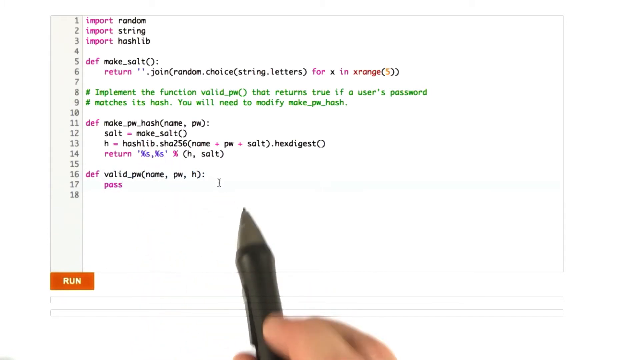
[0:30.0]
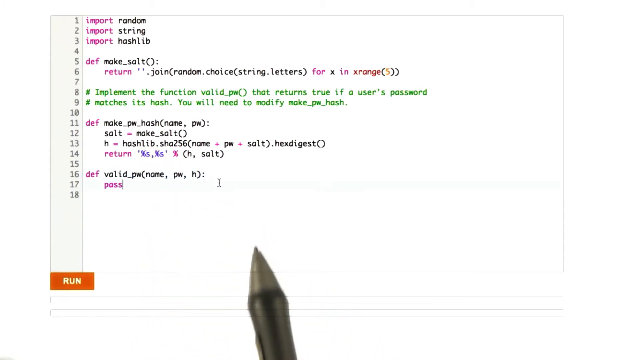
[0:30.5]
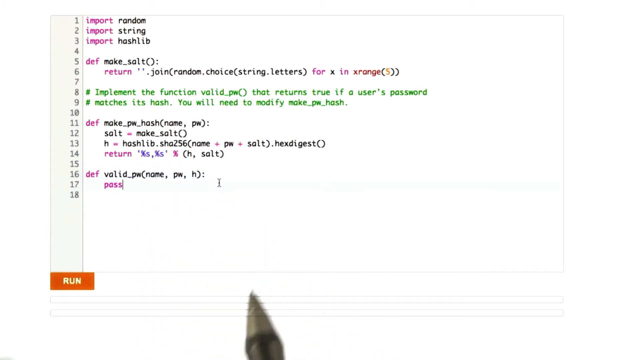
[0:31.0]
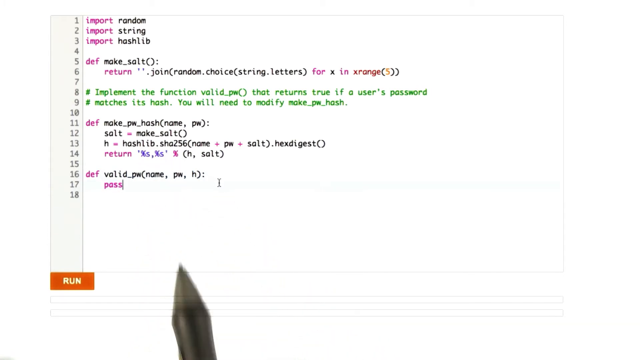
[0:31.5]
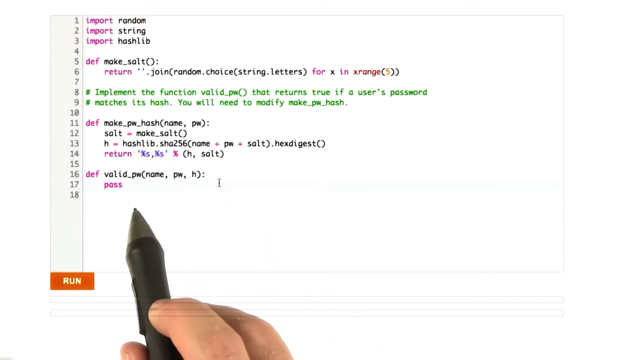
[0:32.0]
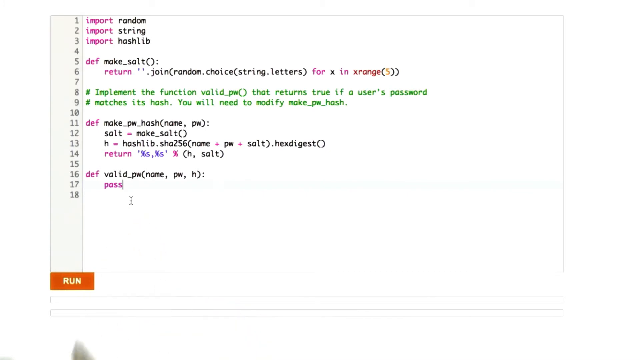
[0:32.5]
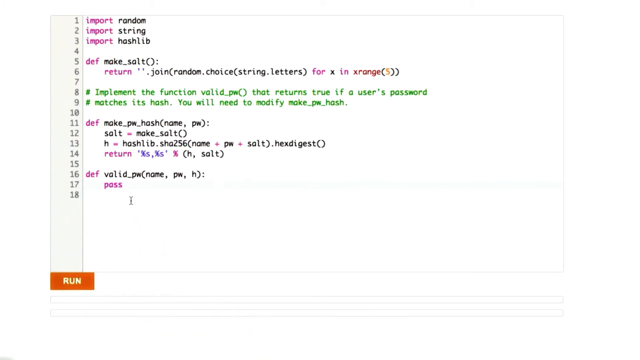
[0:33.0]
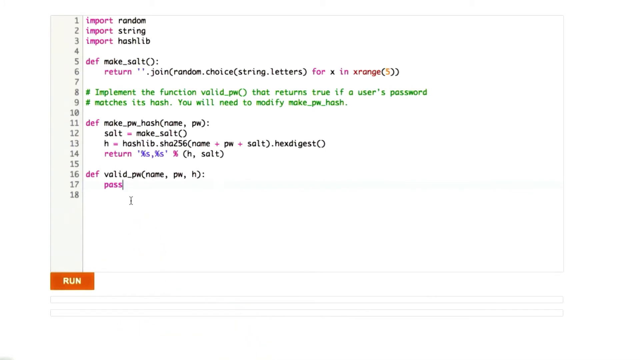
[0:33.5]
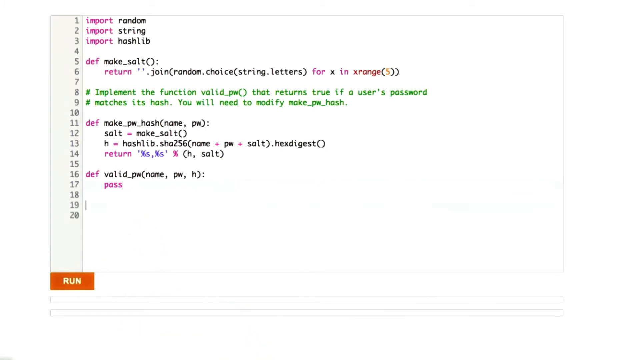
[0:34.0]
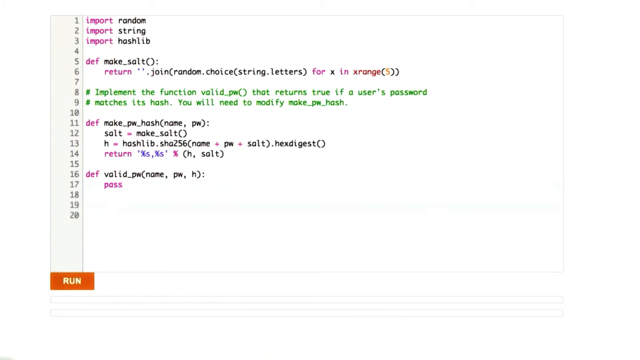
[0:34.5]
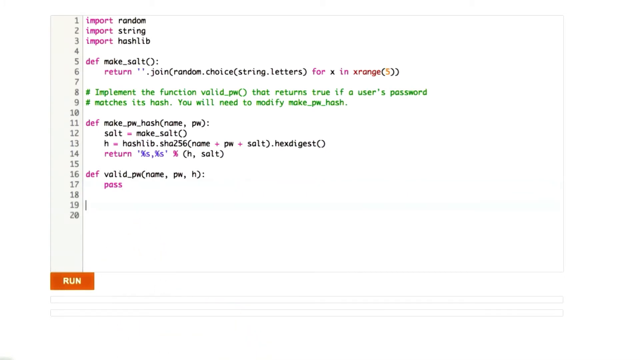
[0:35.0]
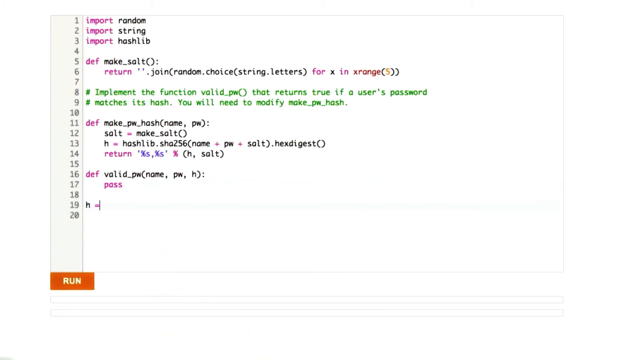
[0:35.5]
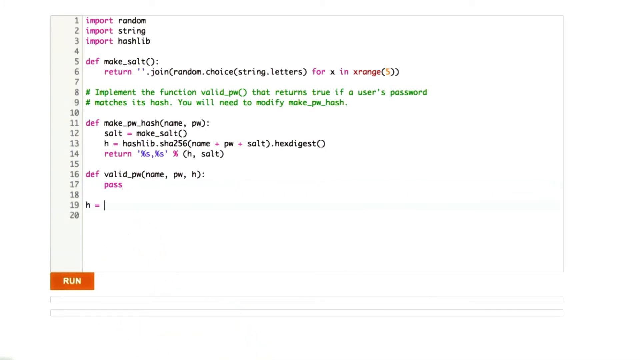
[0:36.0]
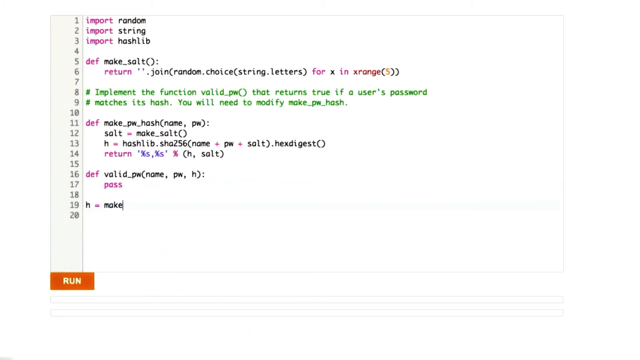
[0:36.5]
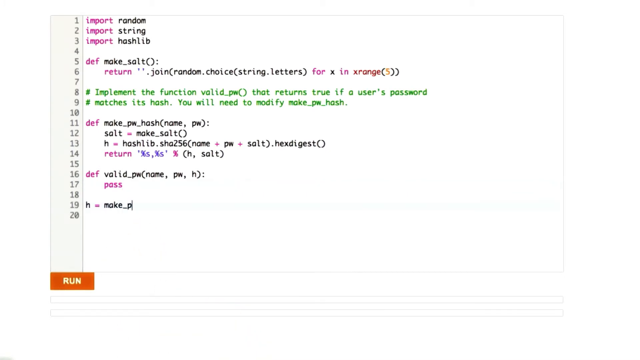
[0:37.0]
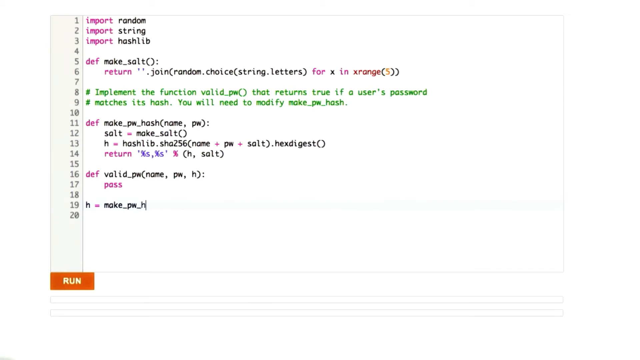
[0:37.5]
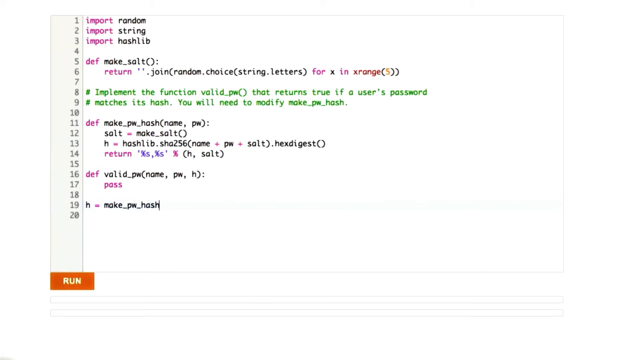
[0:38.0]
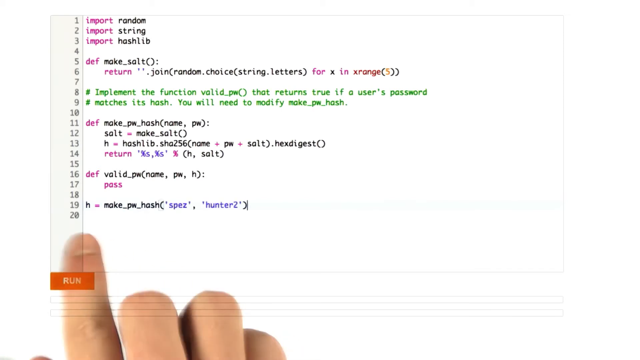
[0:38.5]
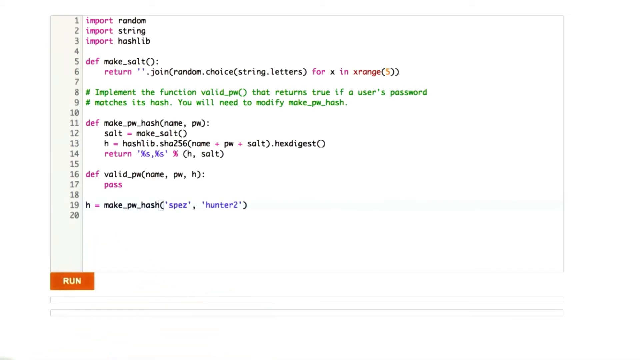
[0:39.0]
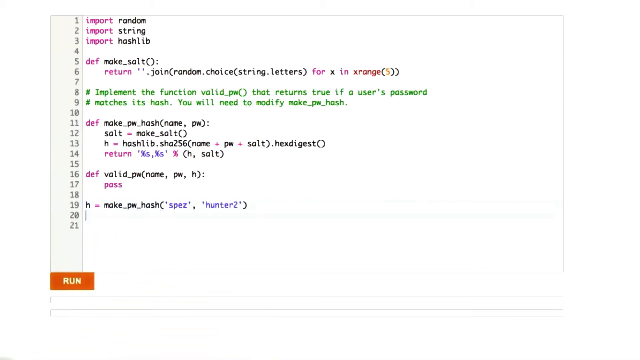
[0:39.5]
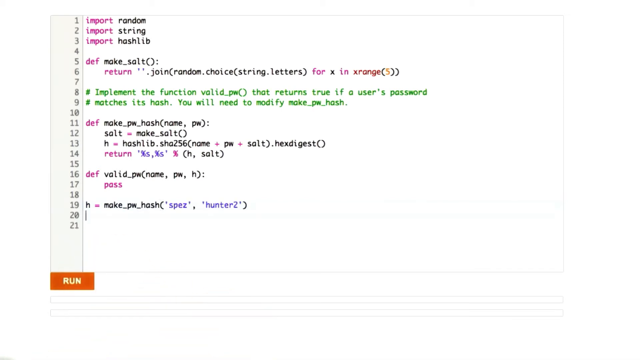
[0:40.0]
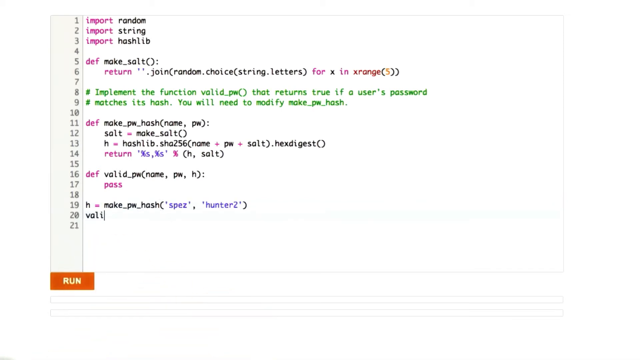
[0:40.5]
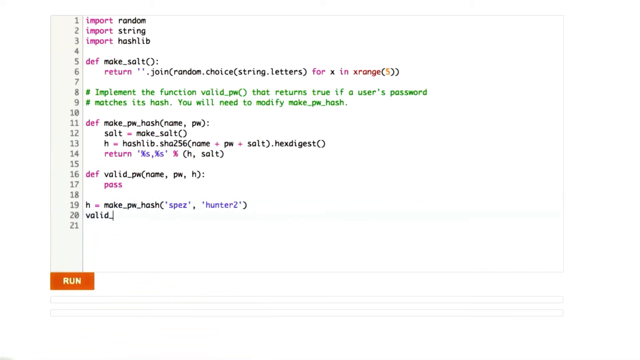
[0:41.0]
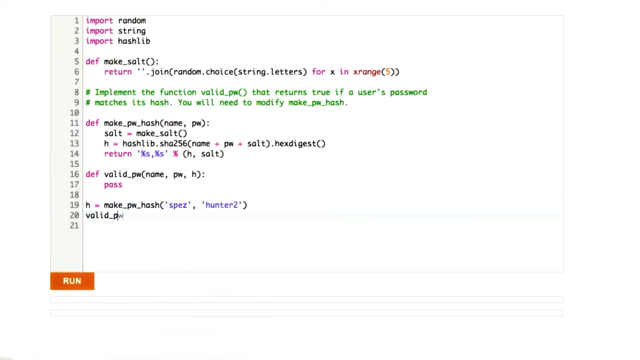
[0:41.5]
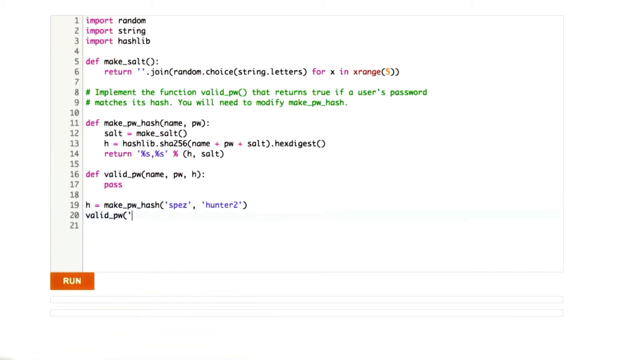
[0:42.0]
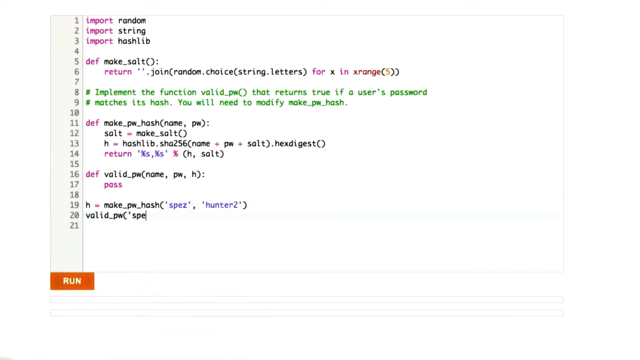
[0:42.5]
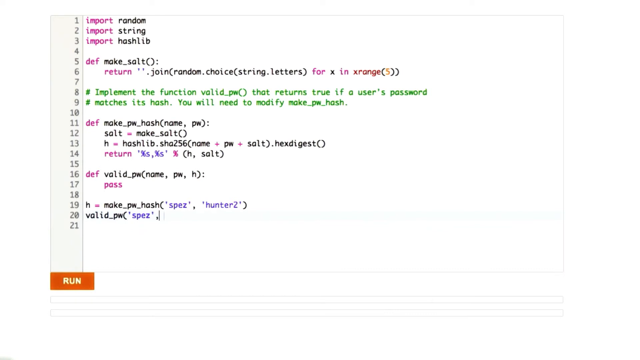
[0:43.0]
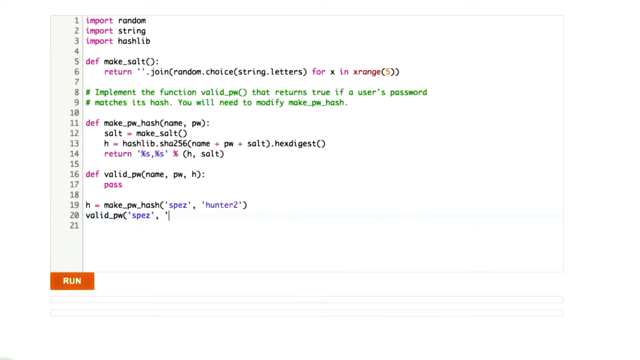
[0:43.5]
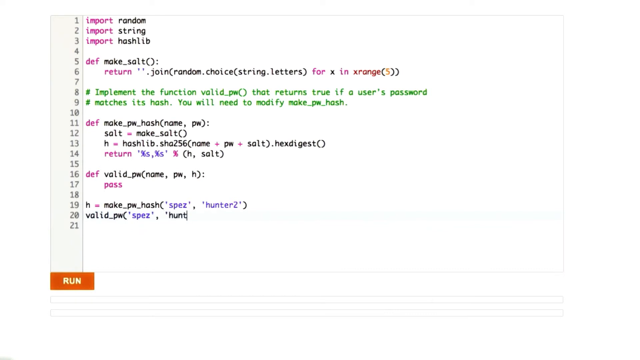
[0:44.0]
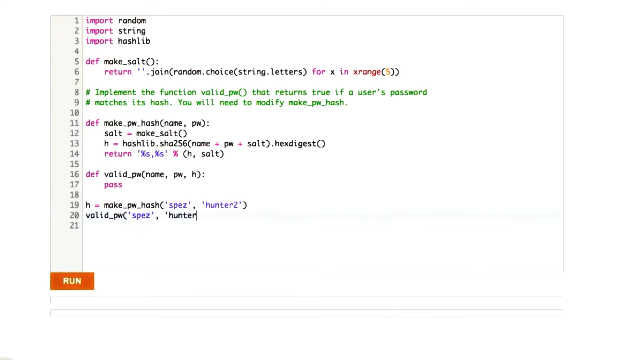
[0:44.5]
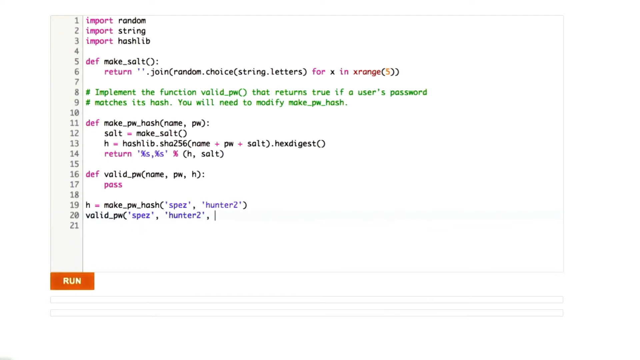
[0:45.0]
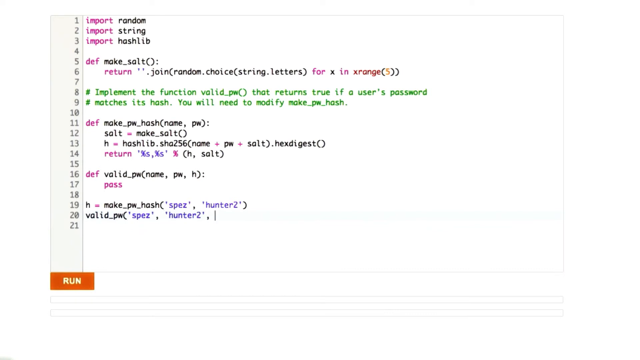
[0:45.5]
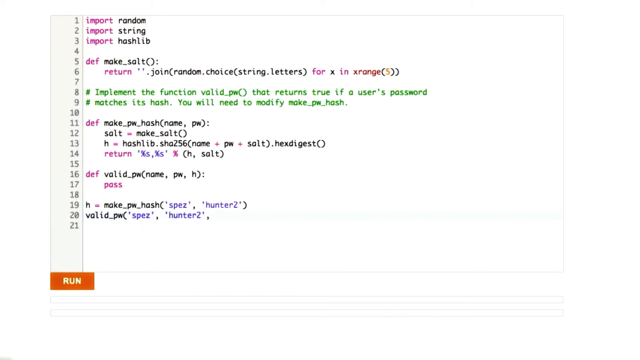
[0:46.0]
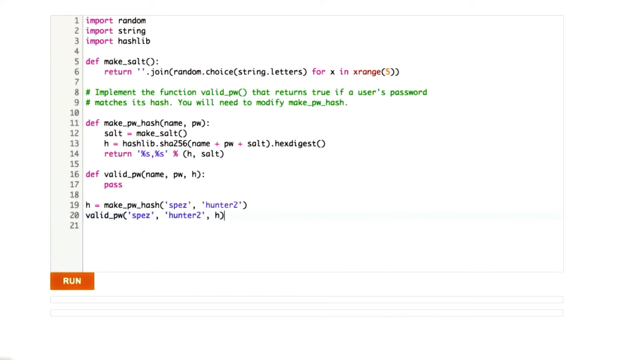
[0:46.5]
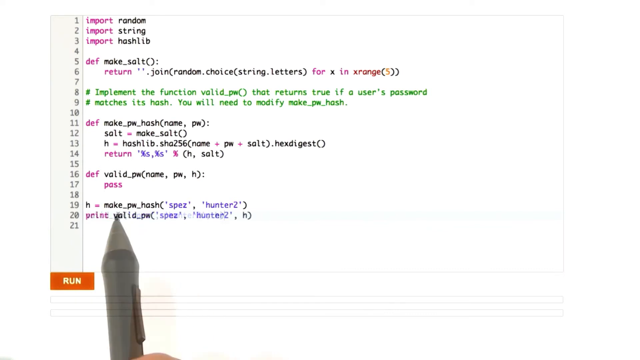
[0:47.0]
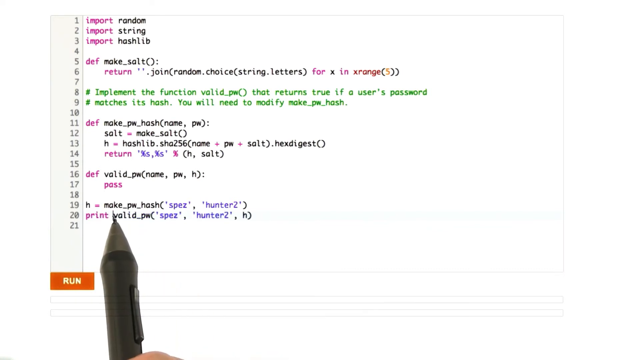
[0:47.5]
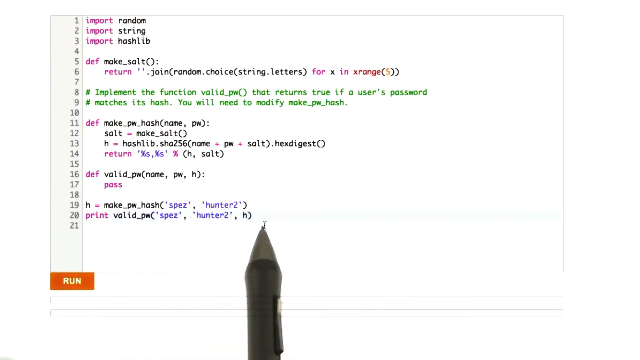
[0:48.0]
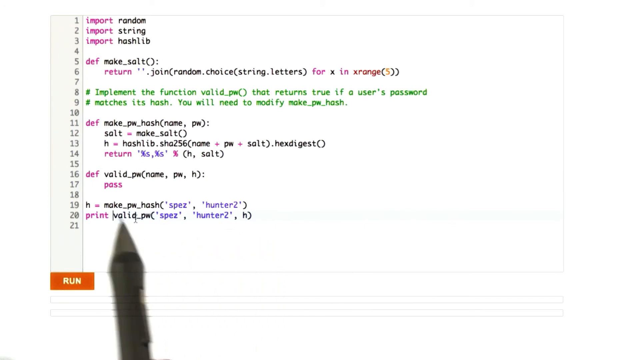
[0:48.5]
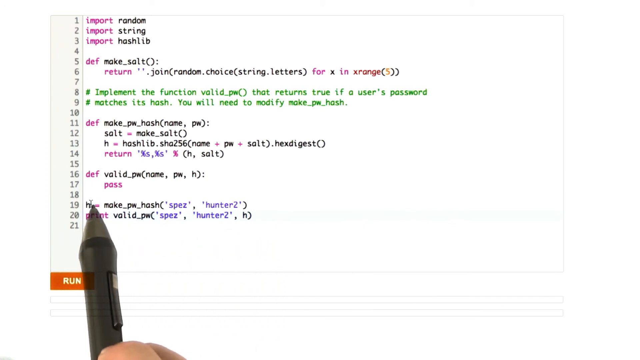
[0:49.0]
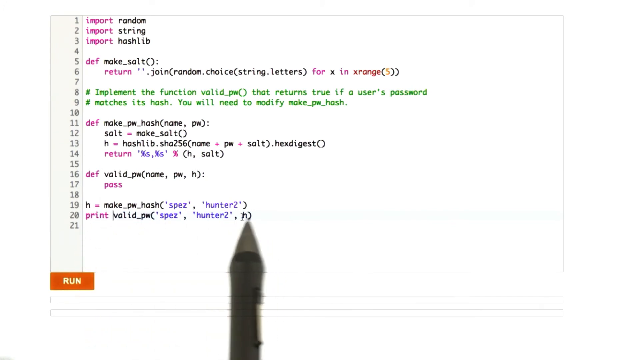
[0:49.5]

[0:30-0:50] A person holding a black pen points on a whiteboard to show what needs to be typed for the code to run. The person continues to write some of the rest of the code. There is a lot of pointing to the text on the whiteboard, and the pen also points to the run option. The code looks rather complicated.